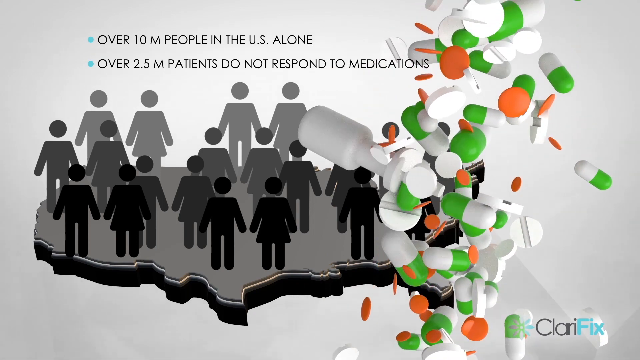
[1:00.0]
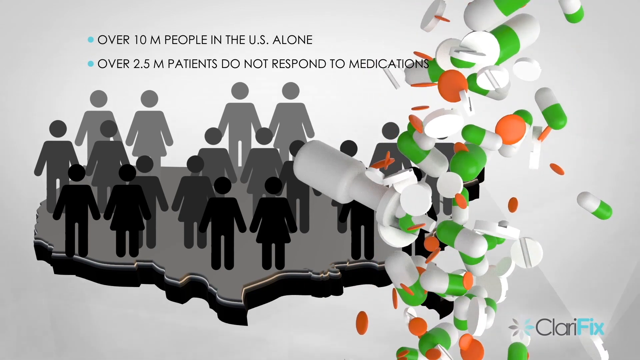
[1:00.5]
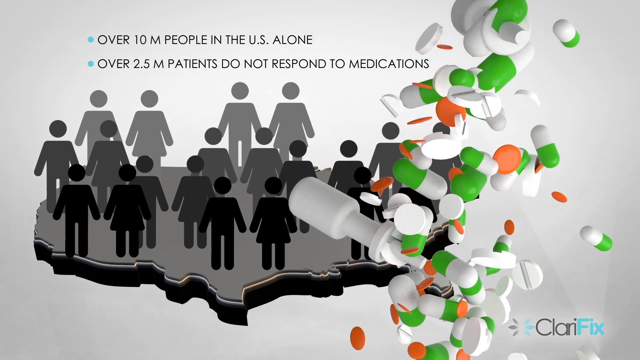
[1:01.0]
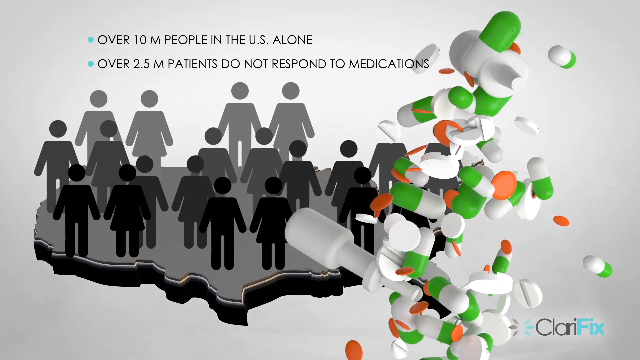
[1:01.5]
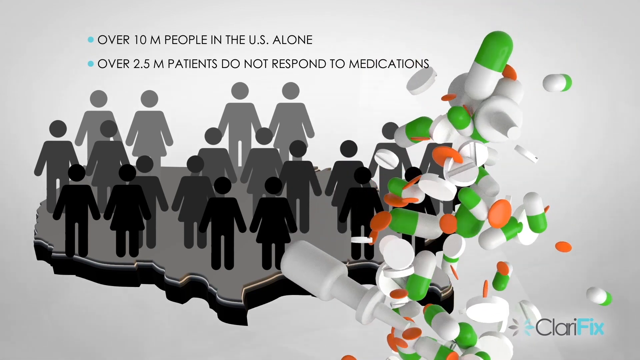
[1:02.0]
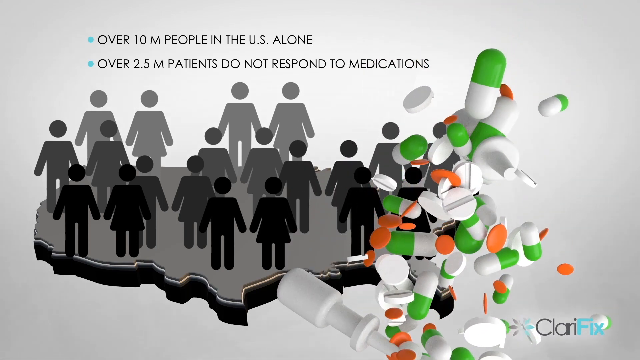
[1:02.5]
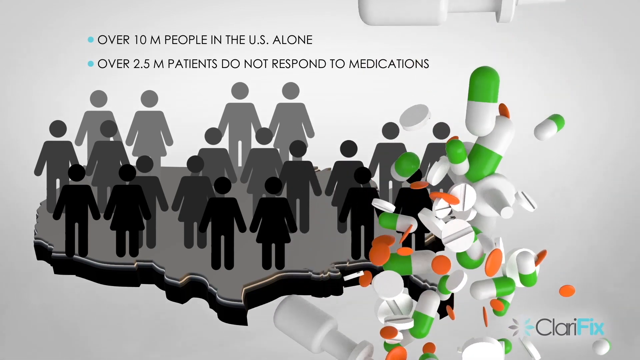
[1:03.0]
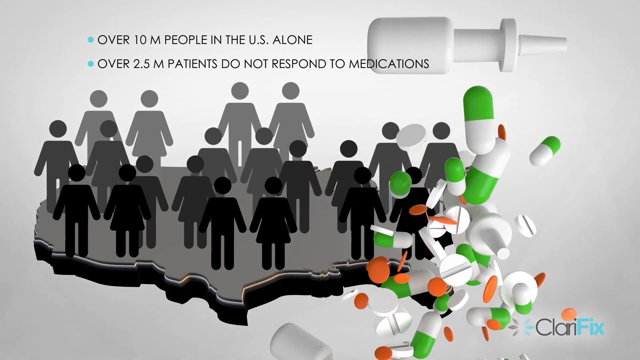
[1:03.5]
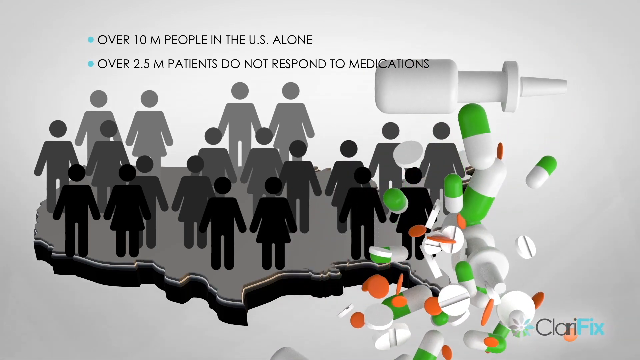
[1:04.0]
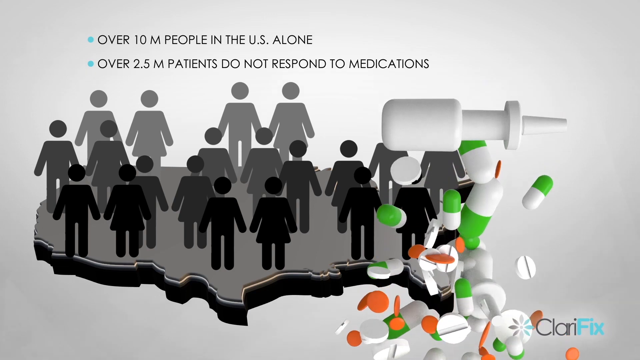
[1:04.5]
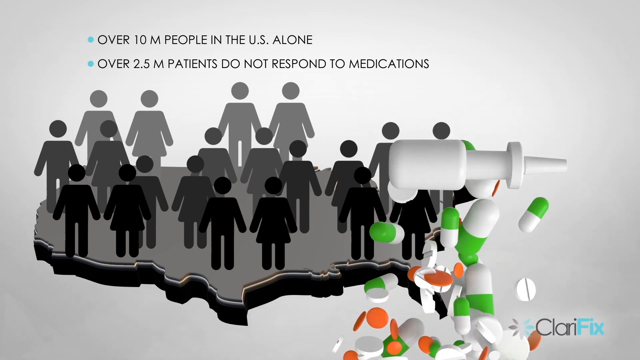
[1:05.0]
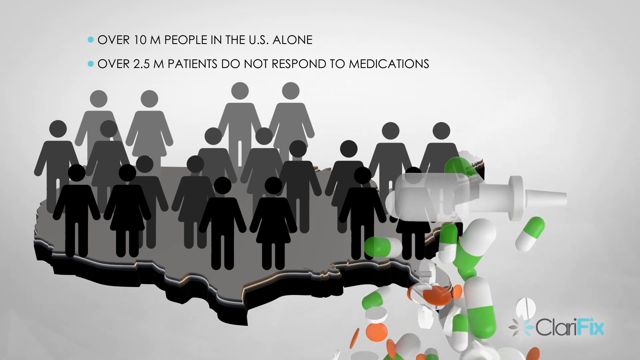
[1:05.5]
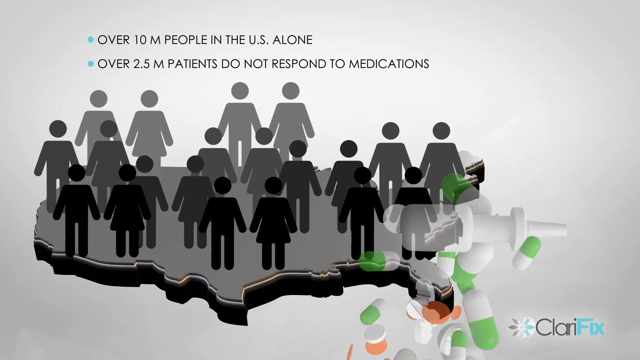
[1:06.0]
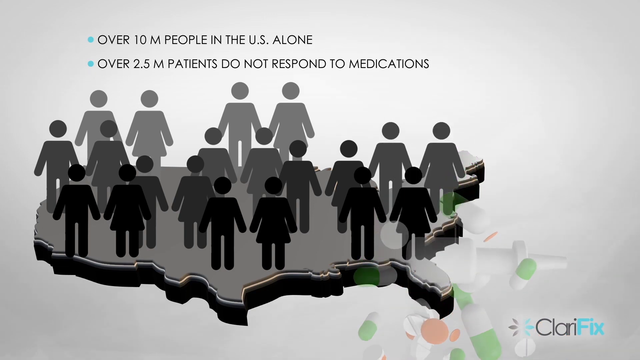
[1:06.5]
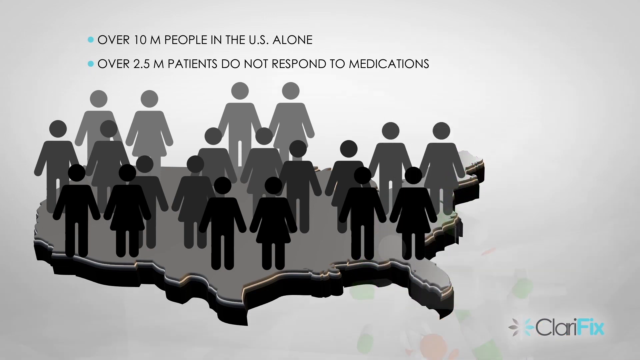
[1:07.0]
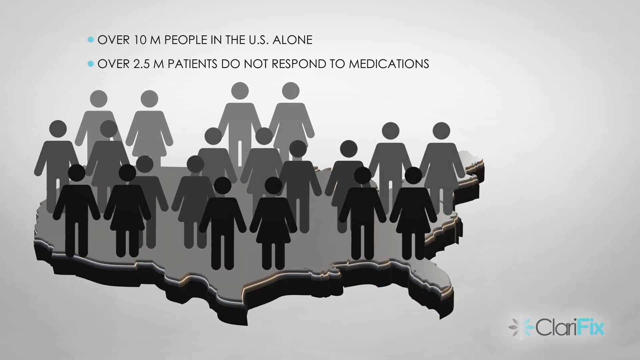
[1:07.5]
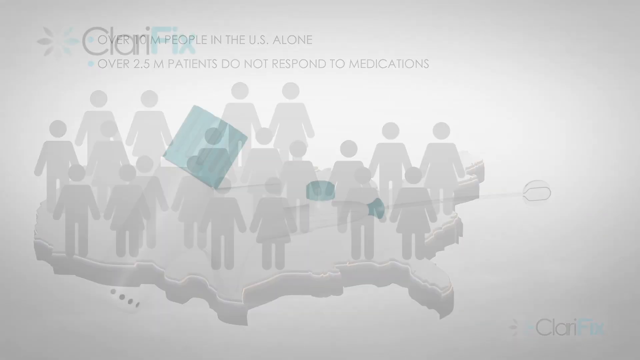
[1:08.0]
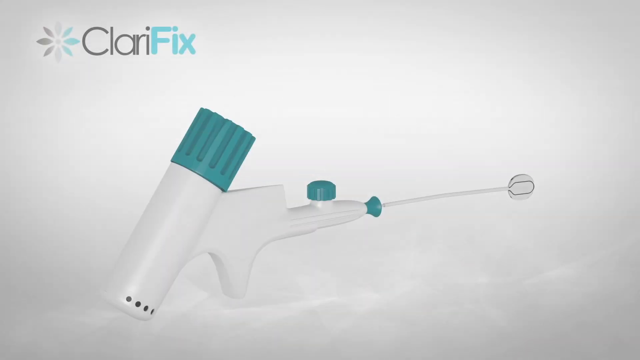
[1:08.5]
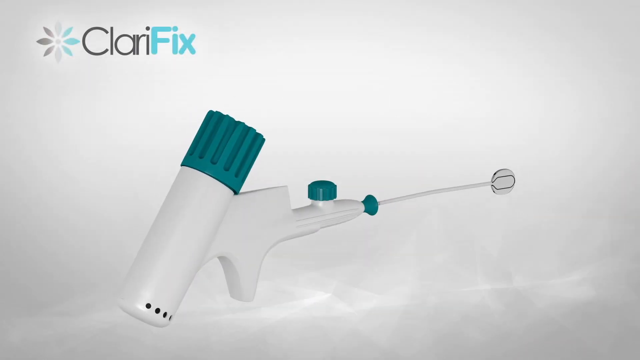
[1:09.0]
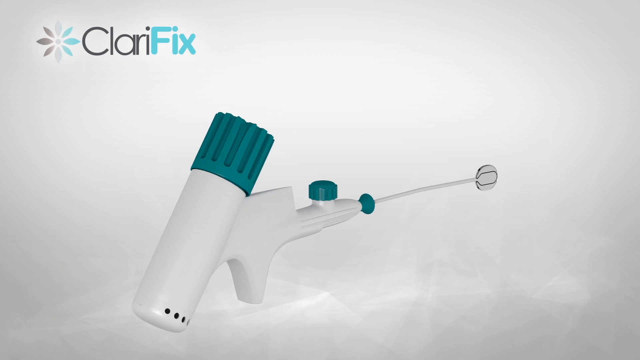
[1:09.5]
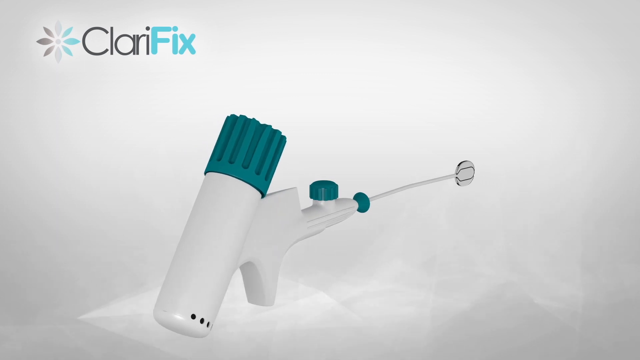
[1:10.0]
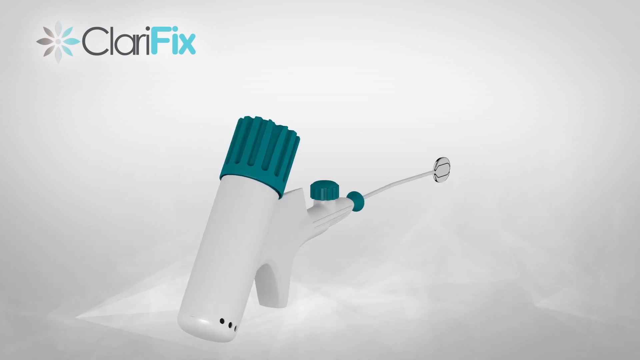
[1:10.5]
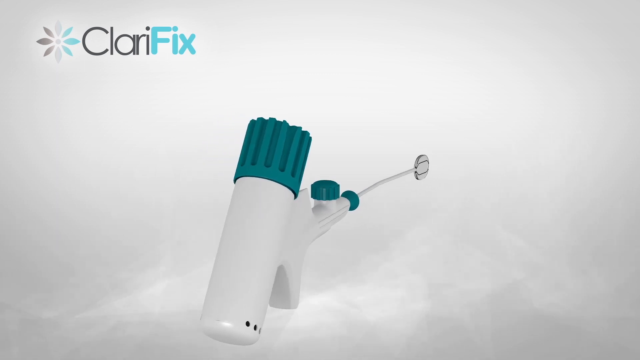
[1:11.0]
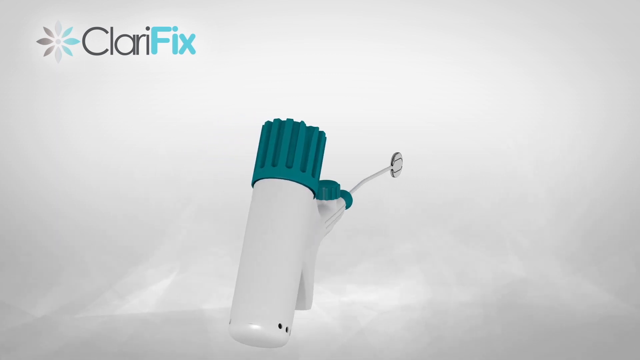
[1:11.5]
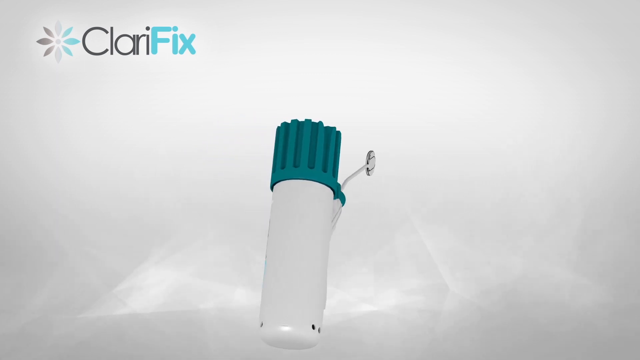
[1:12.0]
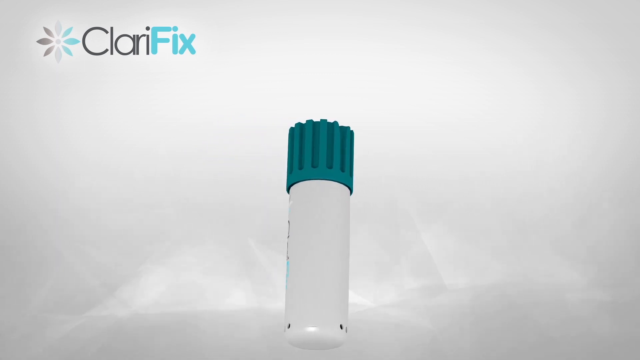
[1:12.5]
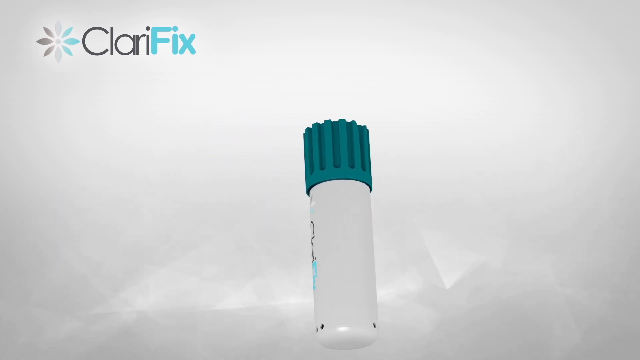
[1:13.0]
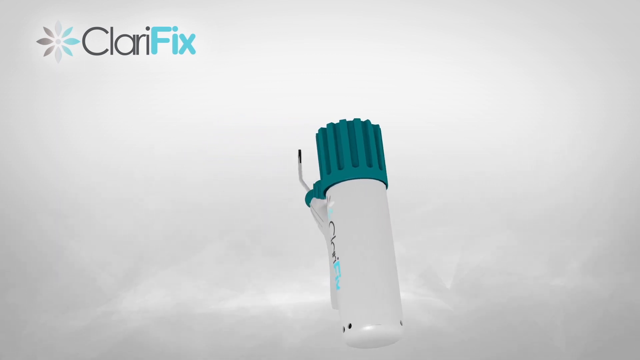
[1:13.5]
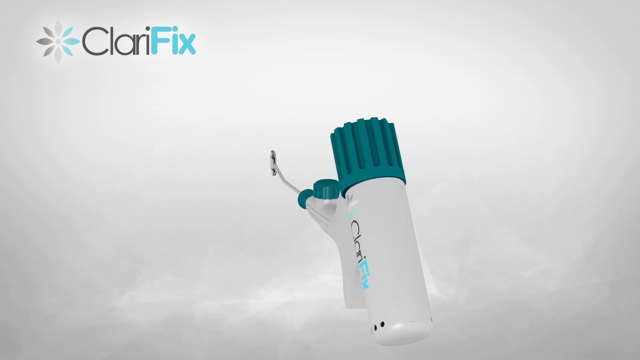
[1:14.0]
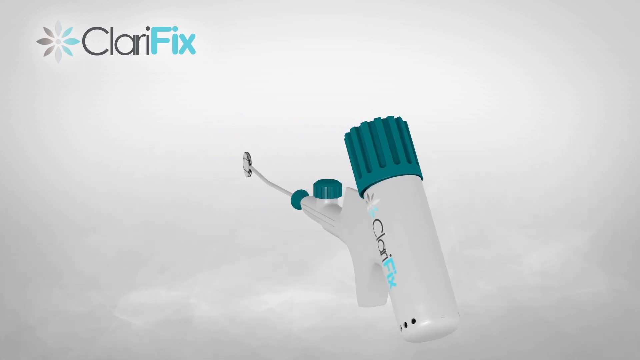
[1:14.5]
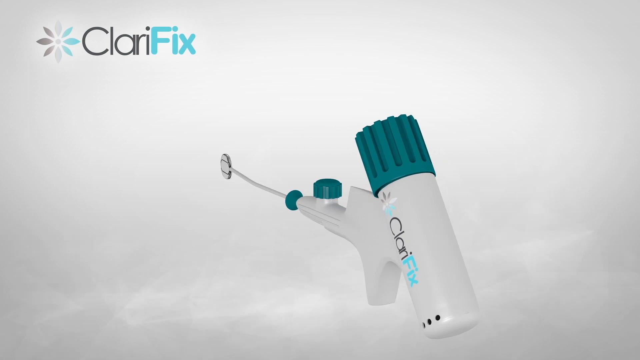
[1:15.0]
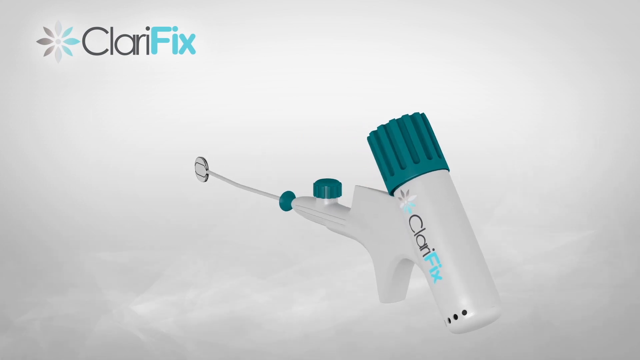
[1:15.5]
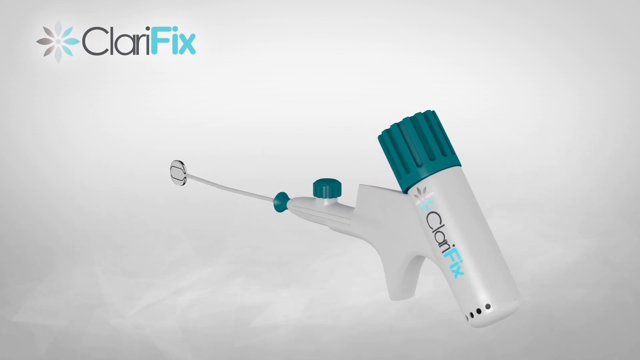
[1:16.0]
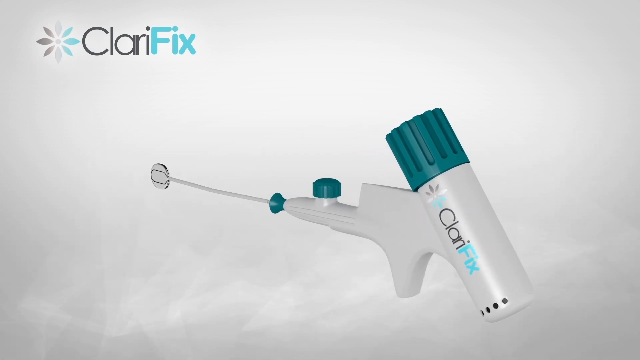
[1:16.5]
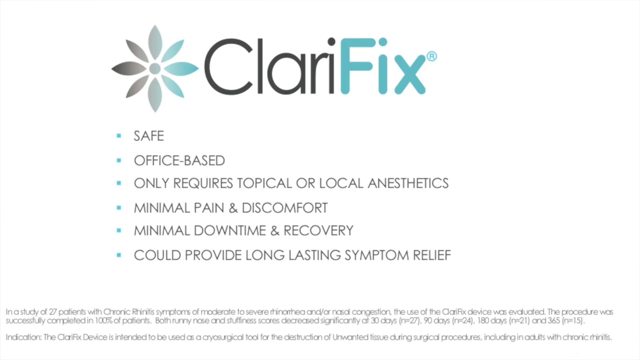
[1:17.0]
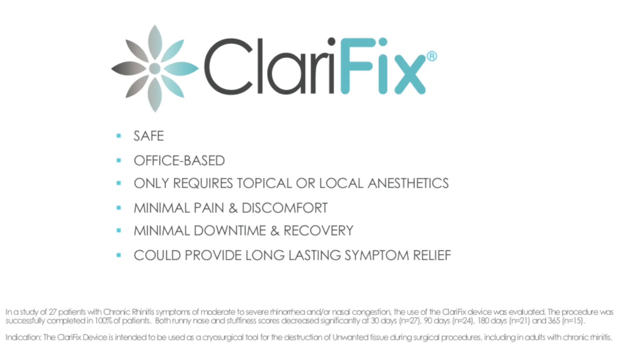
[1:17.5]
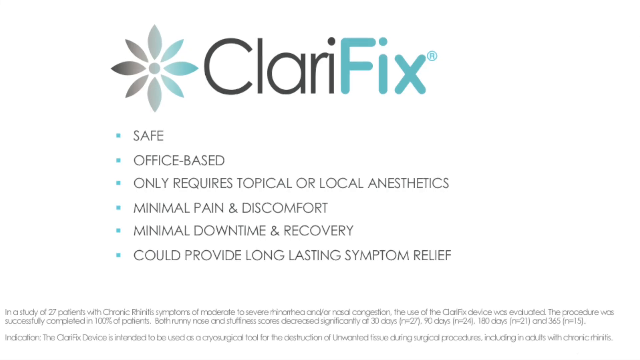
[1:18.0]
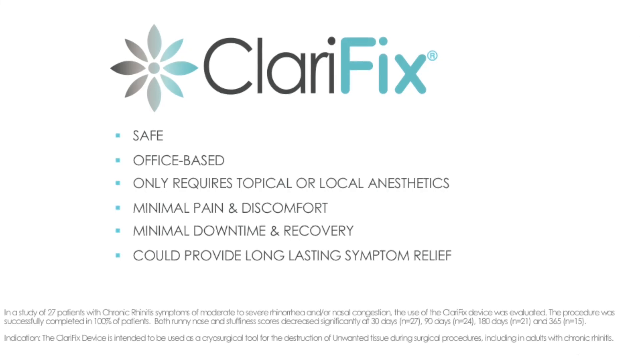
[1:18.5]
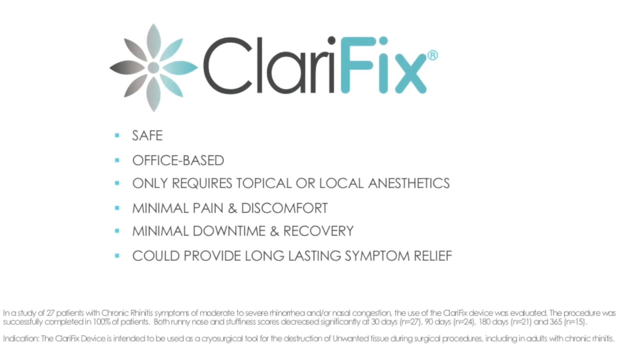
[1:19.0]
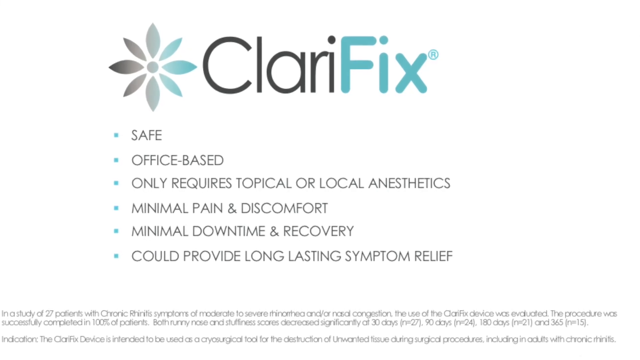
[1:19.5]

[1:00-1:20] On a light gray background is a medium gray 3D image of the United States with its edges visible. All over the map are many of the stock bathroom symbols for man and woman, one man and one woman, in light gray, medium gray and dark gray. Pills fall down: white tablets with a demarcation line, orange ones, green-and-white capsules, and nasal sprays as well. Beside light blue bullet points the text reads "over 10M people in the U.S. alone" and "over 2.5M patients do not respond to medications." The pills keep falling, and at the bottom there is a logo of a flower with "Clarifix." The page then changes to the Clarifix logo, a flower in a gray to light blue gradient, with "Clari" in black and "Fix" in blue. Some kind of device rotates on the screen; it almost looks like a gun of some kind and is white with dark green additions.